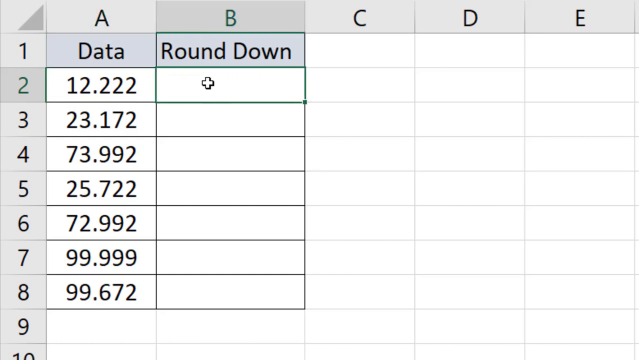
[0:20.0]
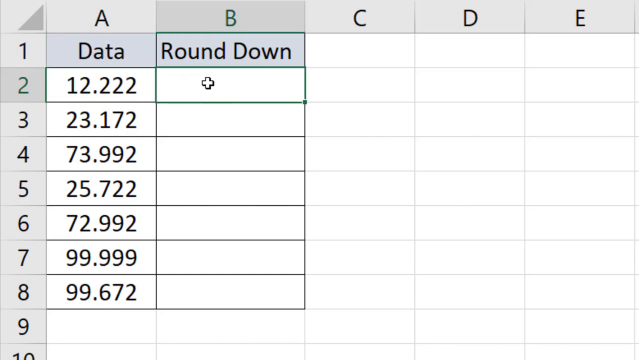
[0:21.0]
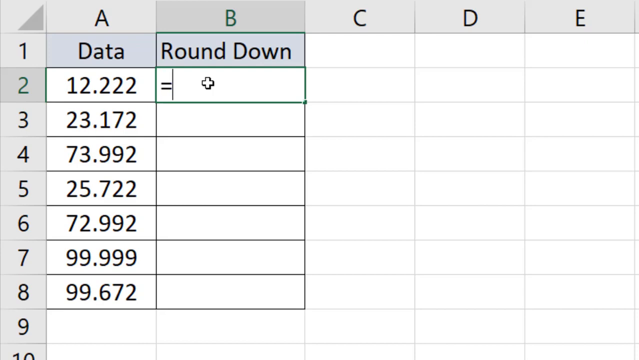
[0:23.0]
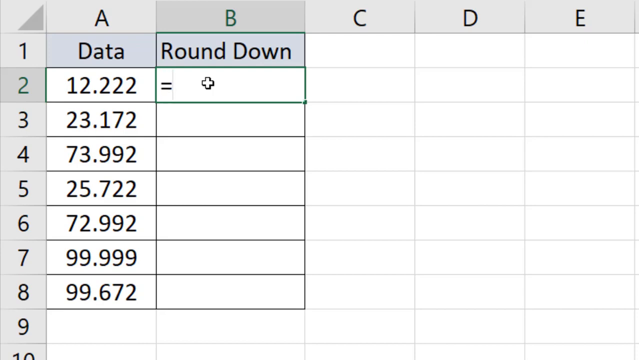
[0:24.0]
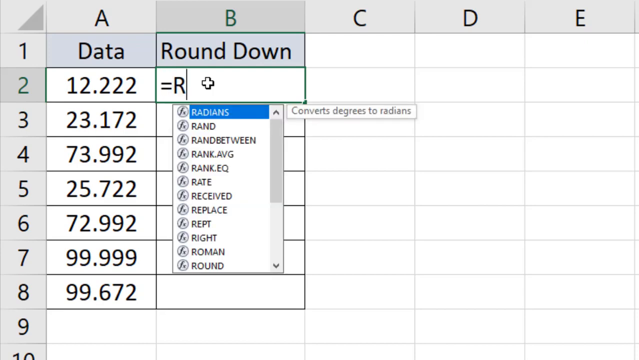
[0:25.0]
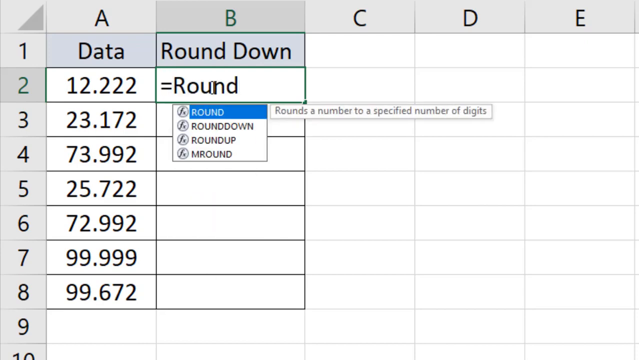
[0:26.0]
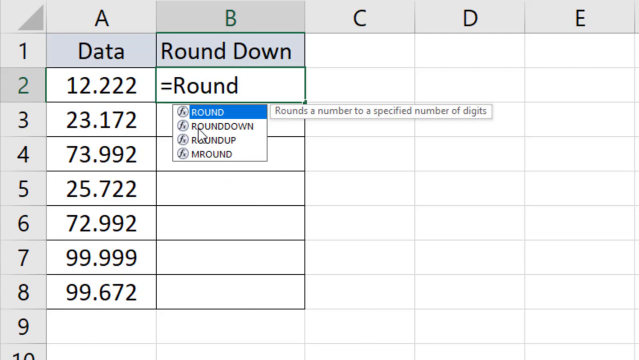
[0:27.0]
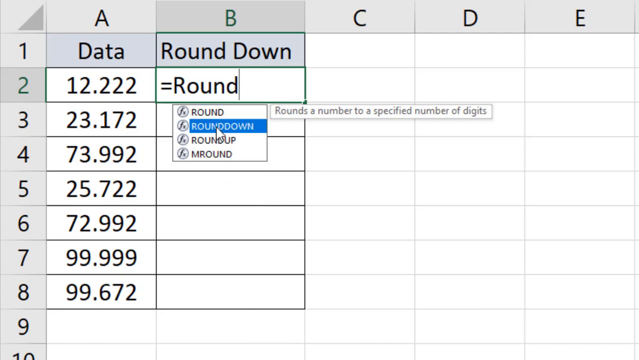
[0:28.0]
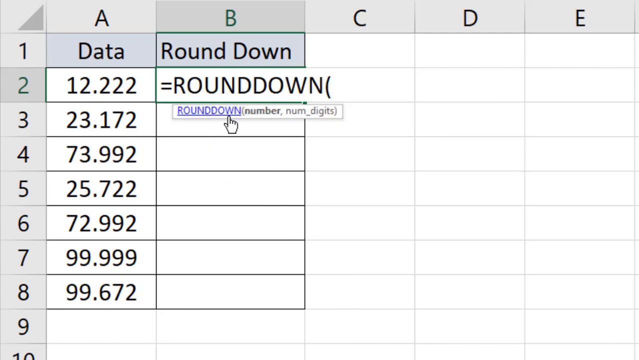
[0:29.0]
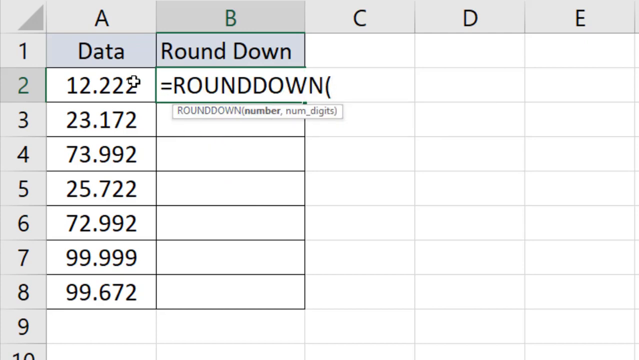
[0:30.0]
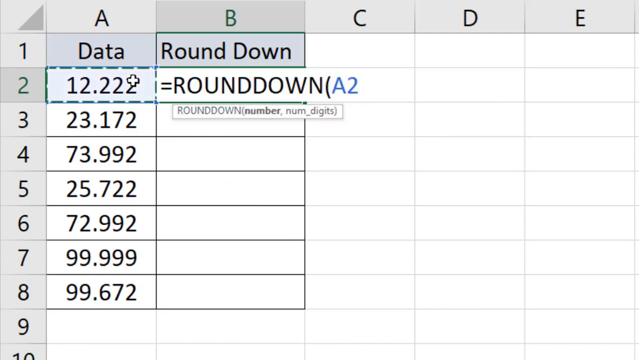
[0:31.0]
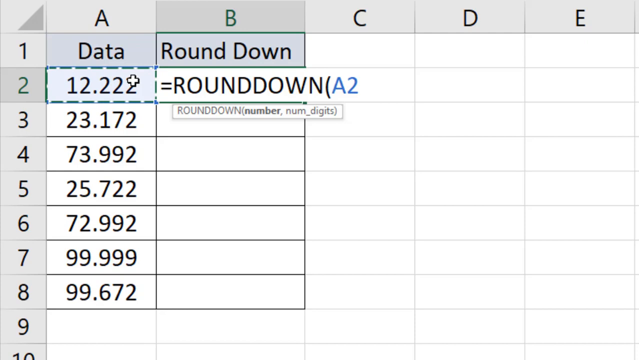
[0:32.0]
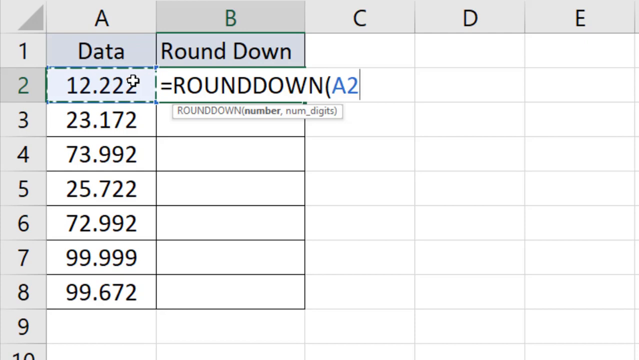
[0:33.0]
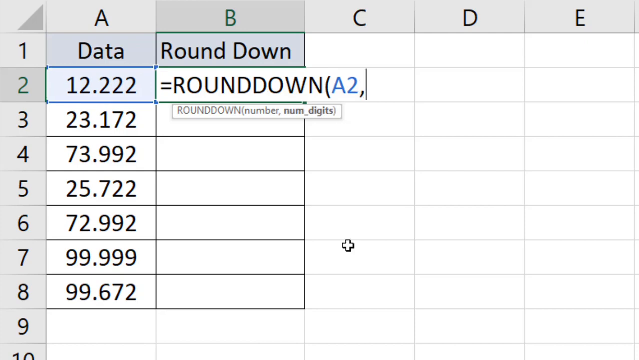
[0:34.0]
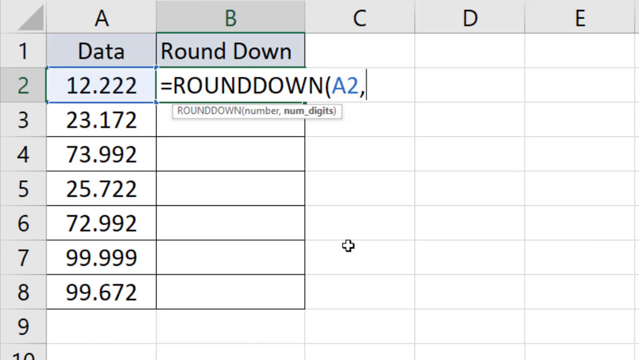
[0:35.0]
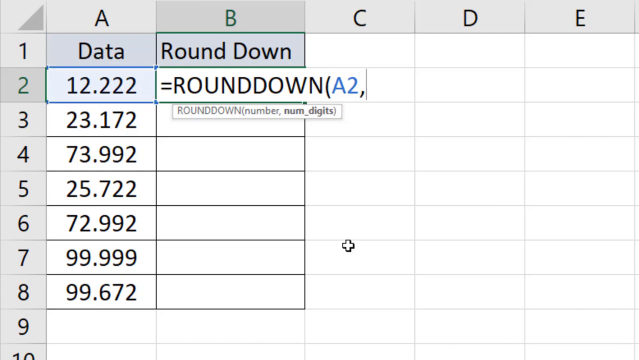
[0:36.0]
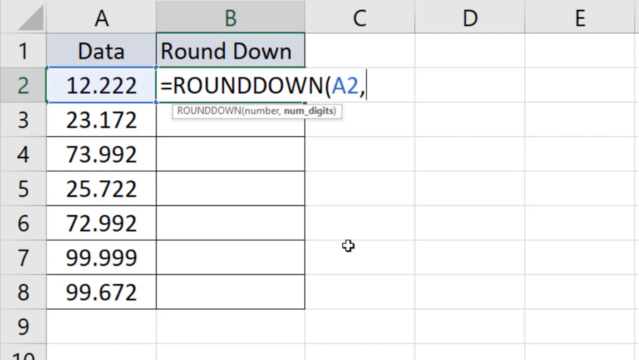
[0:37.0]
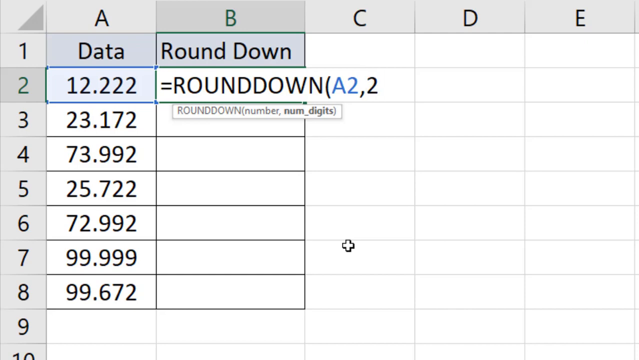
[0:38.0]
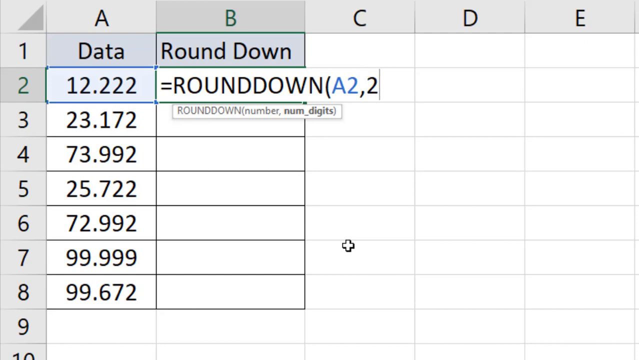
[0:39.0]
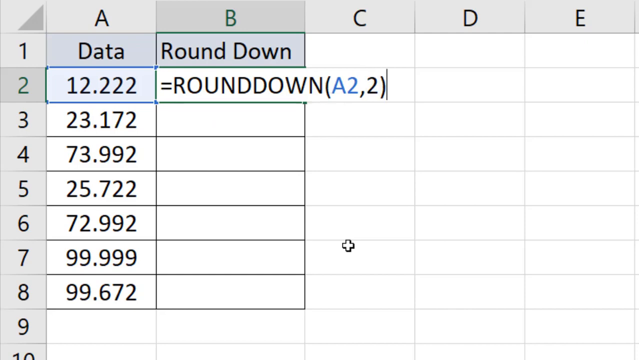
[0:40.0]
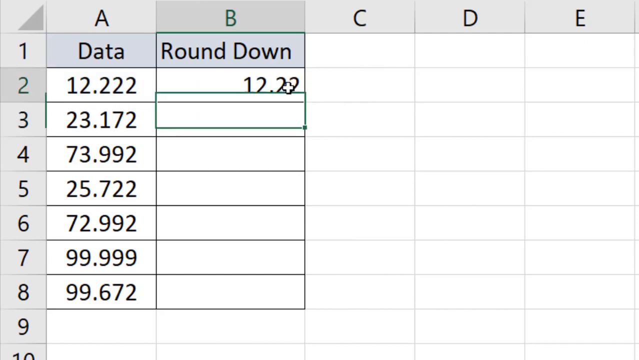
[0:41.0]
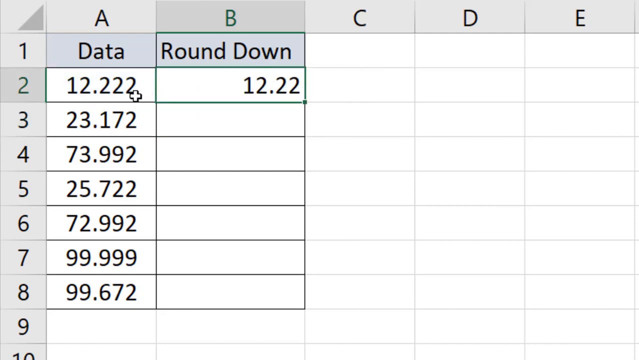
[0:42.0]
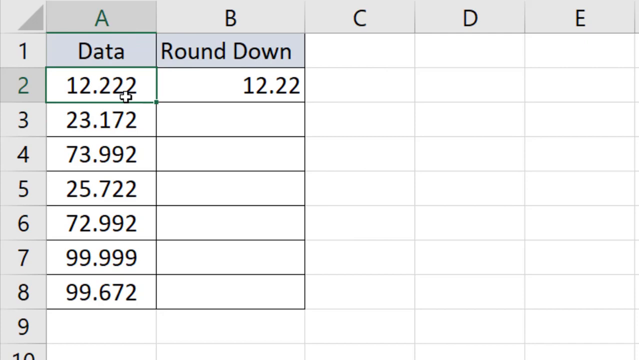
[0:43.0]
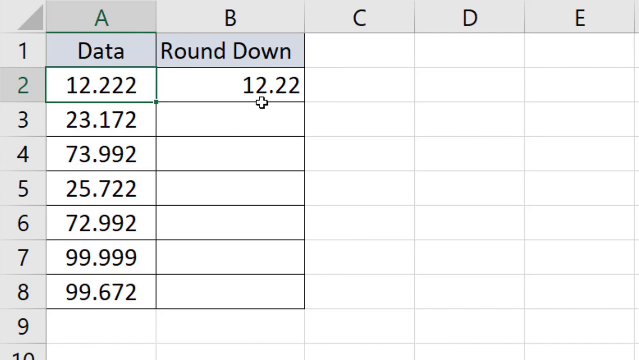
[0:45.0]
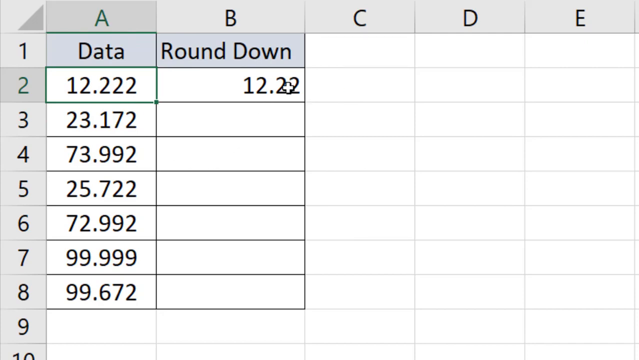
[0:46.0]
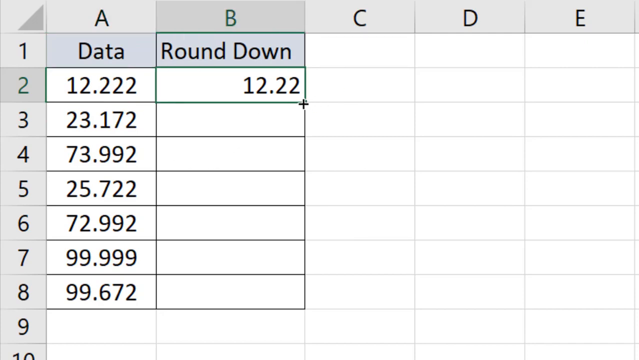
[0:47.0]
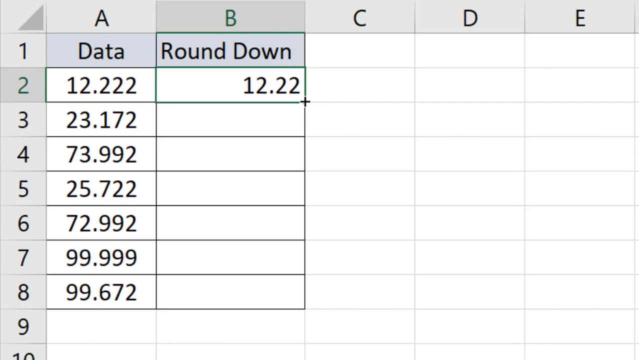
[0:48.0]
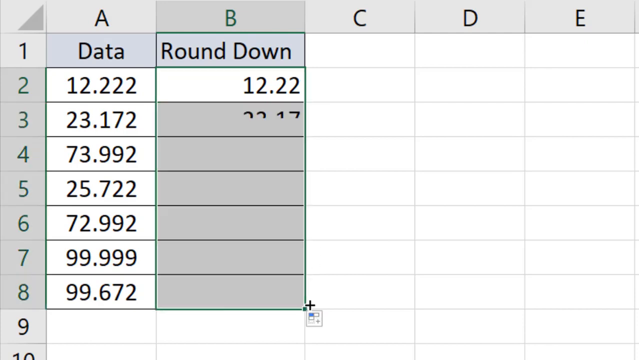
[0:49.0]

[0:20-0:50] The page on the computer screen shows columns A, B, C and D along with numbers, including 2,022, 222, 23 and 172, and round down. Rows 9 and 10 are blank. Row 3 shows round, and row 4 shows round down. There are no humans, kids or animals; everything is on the computer screen.